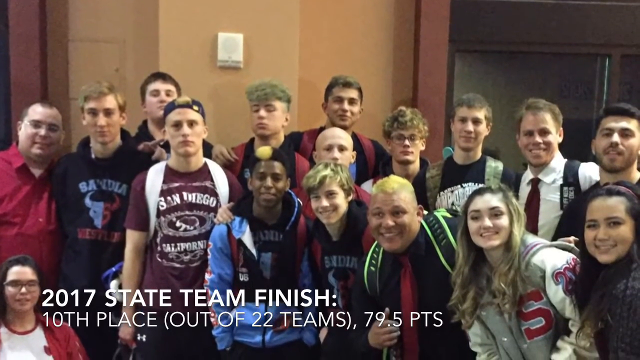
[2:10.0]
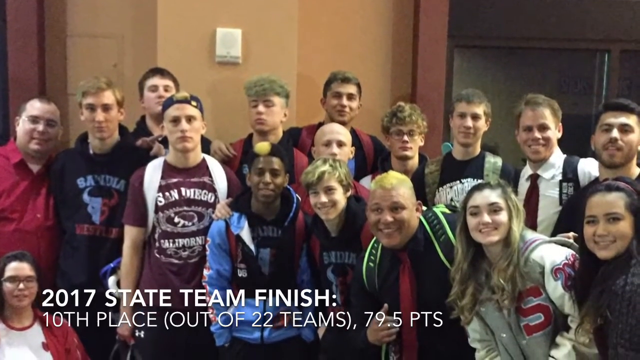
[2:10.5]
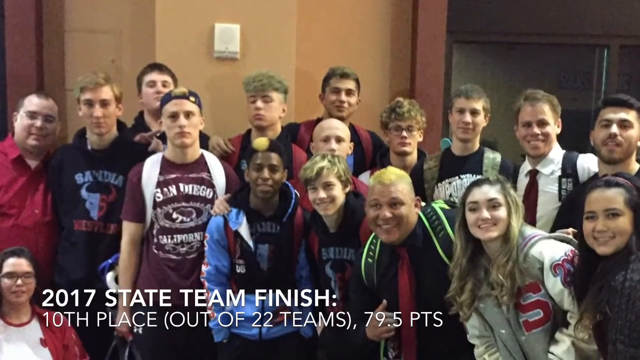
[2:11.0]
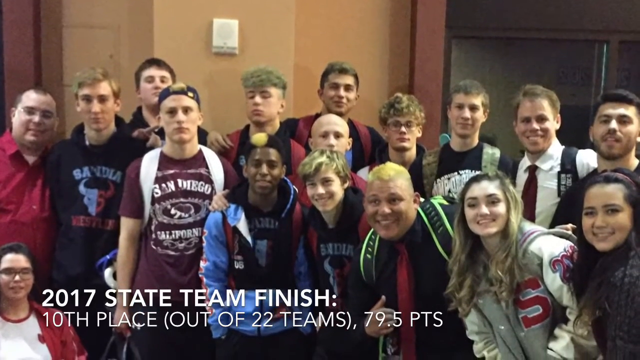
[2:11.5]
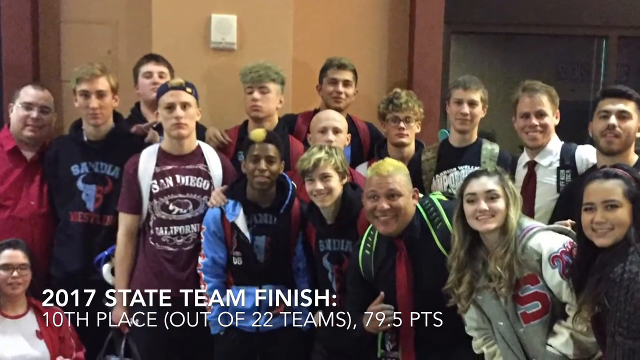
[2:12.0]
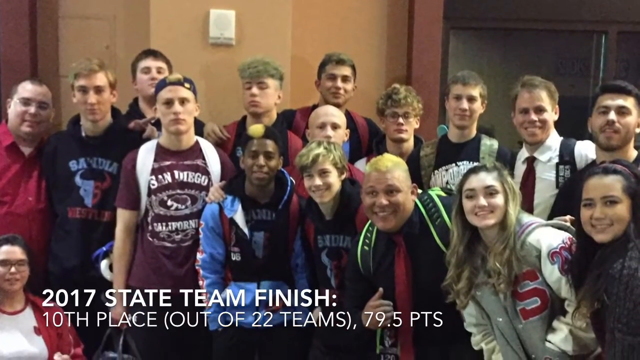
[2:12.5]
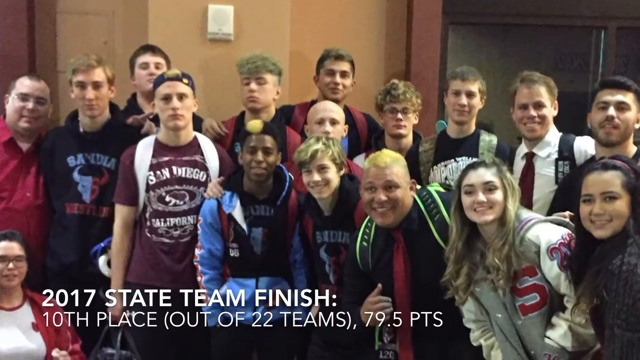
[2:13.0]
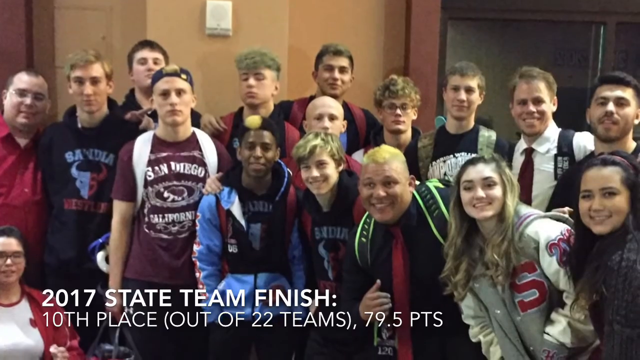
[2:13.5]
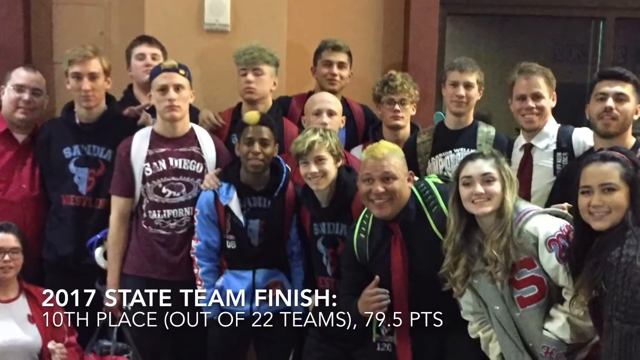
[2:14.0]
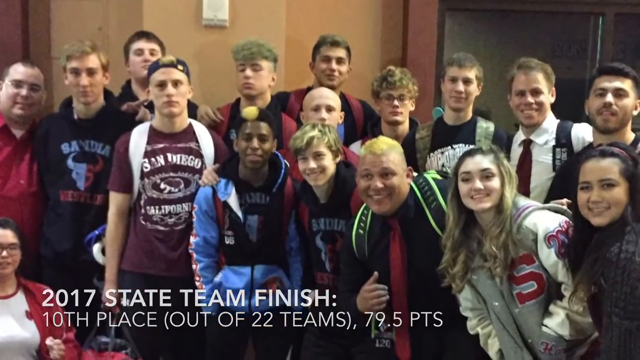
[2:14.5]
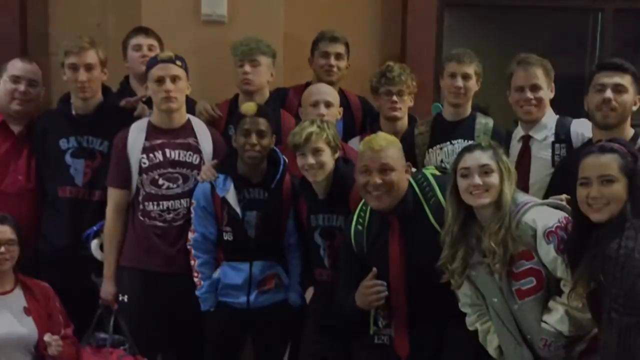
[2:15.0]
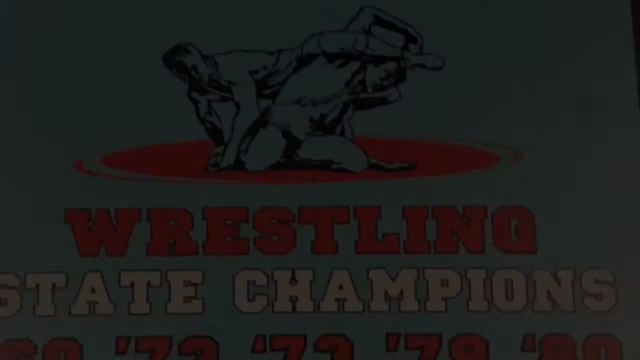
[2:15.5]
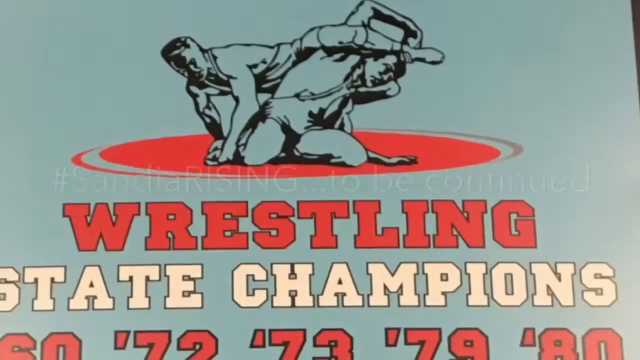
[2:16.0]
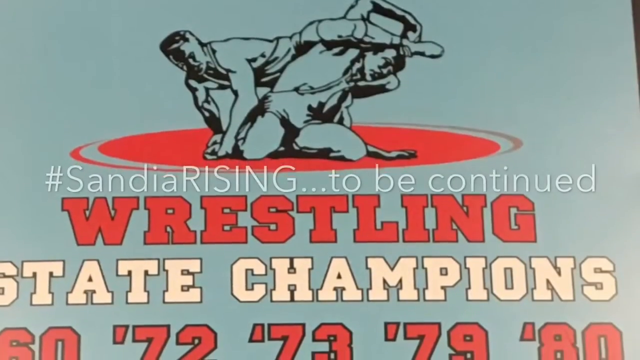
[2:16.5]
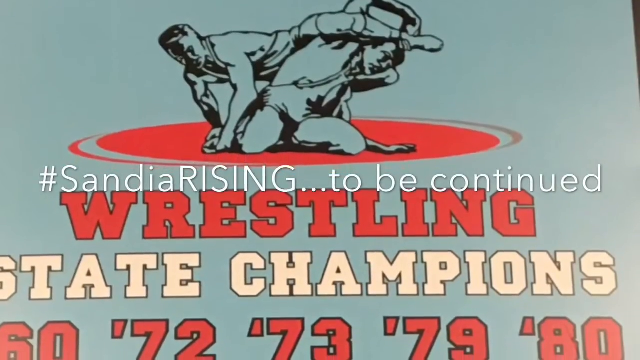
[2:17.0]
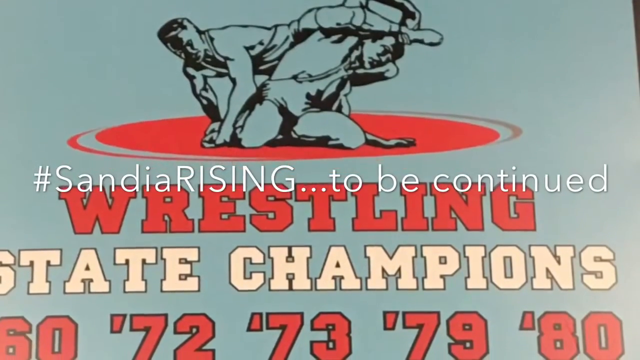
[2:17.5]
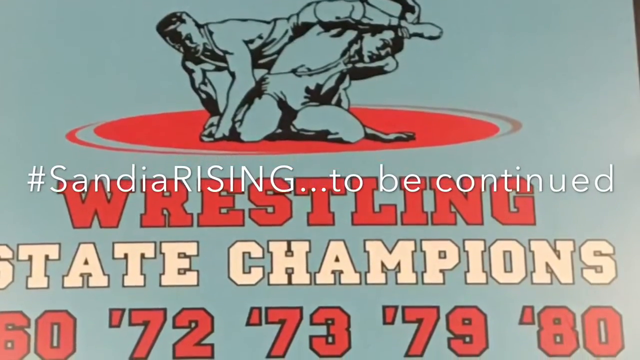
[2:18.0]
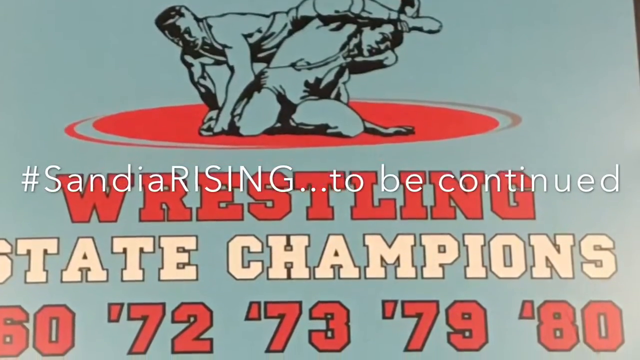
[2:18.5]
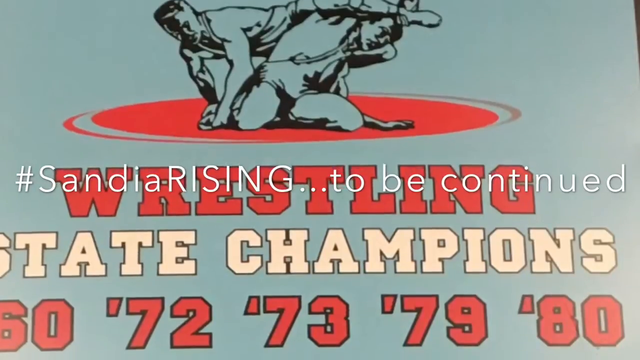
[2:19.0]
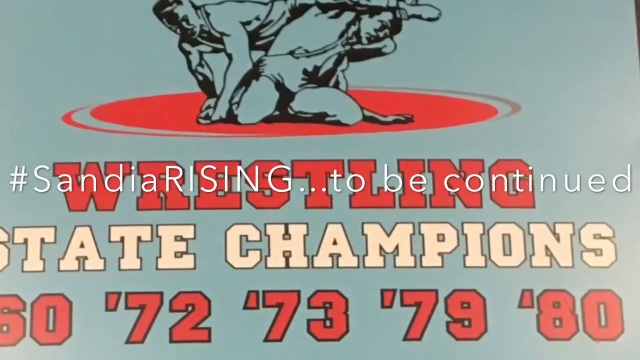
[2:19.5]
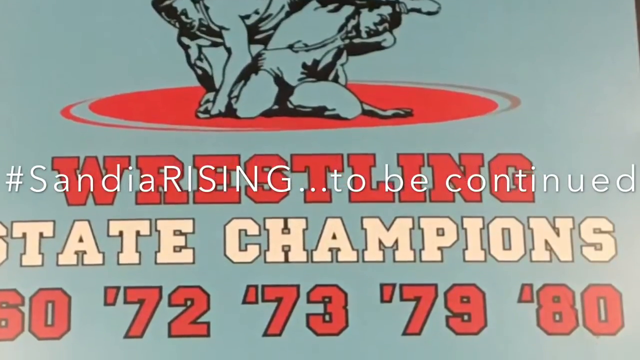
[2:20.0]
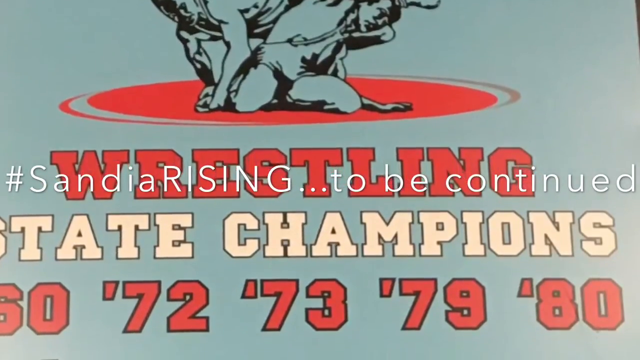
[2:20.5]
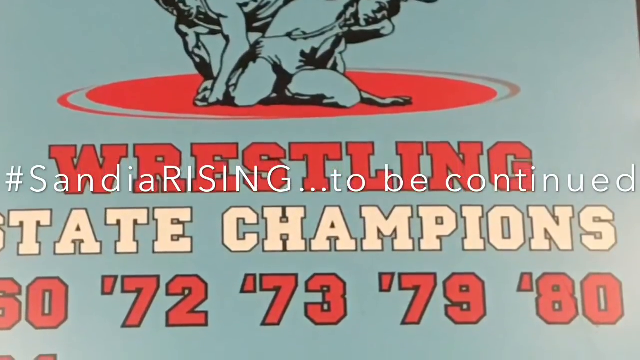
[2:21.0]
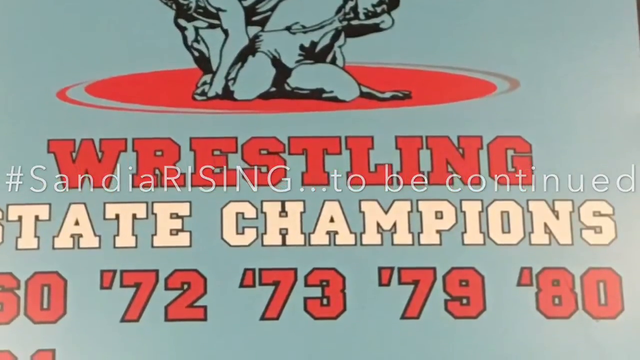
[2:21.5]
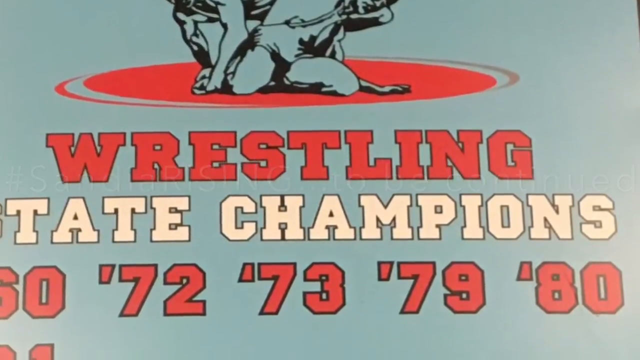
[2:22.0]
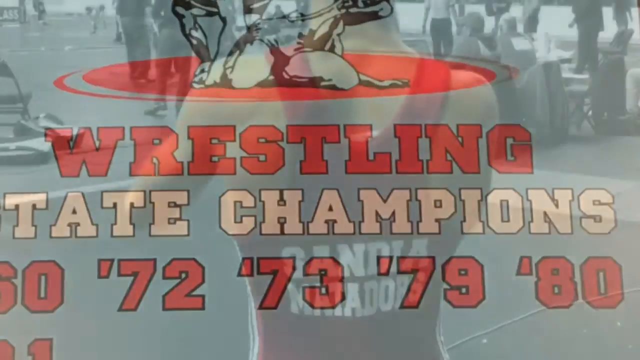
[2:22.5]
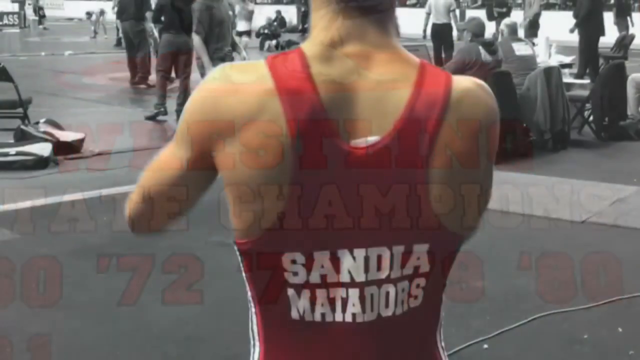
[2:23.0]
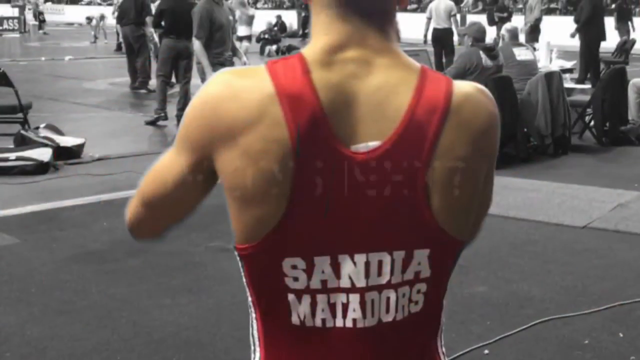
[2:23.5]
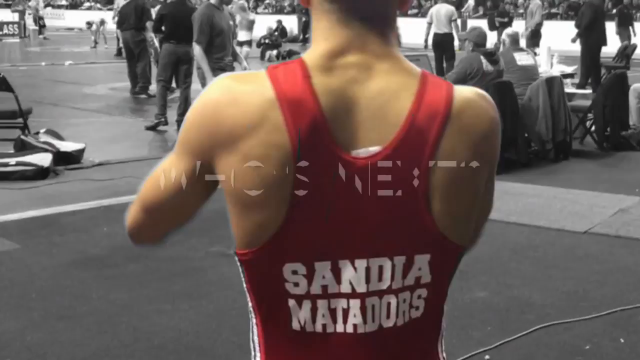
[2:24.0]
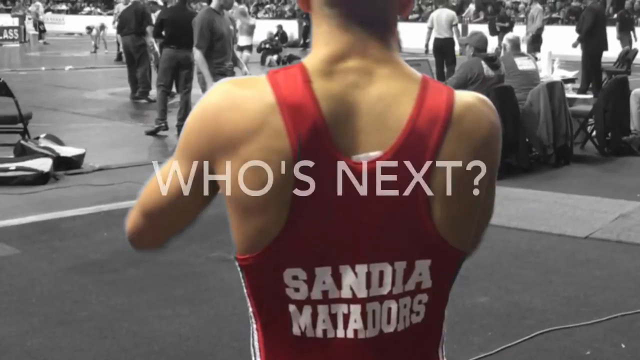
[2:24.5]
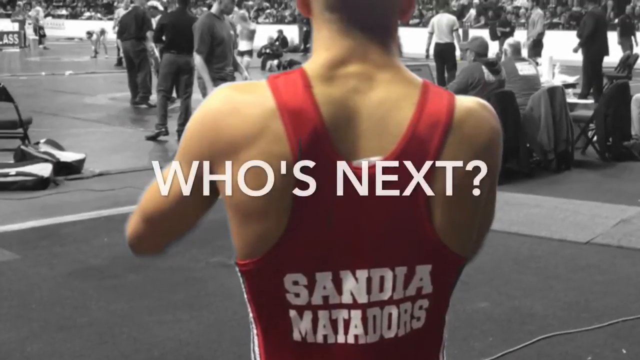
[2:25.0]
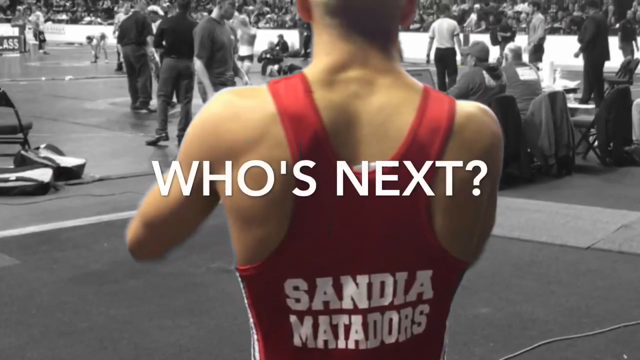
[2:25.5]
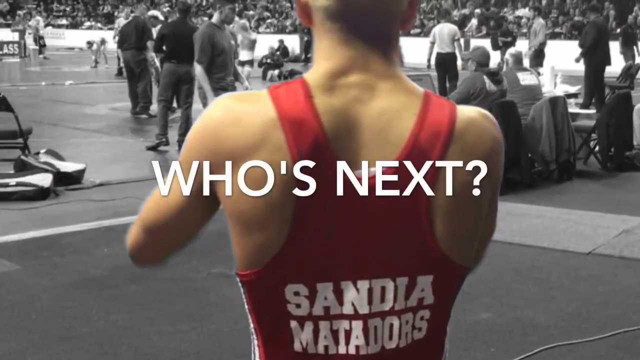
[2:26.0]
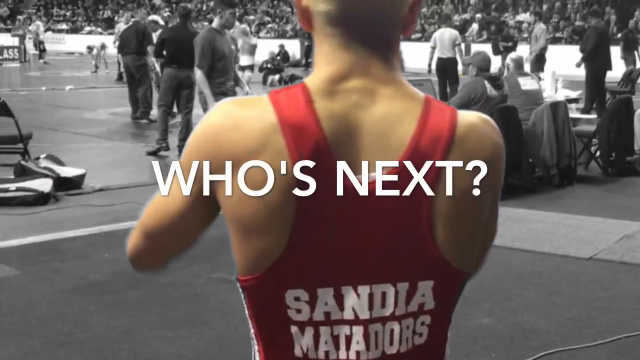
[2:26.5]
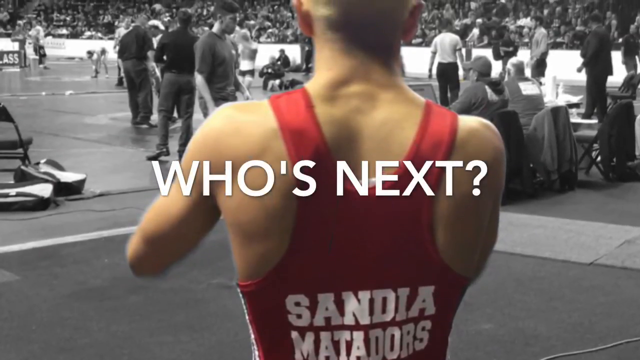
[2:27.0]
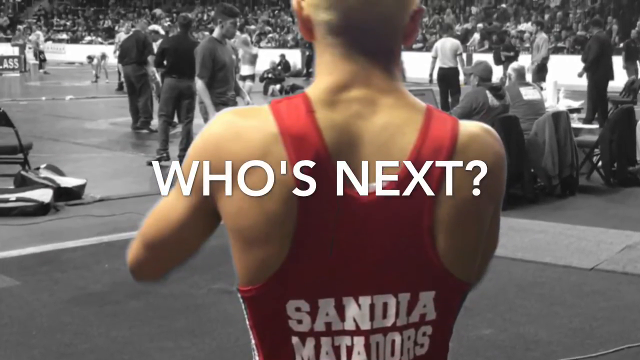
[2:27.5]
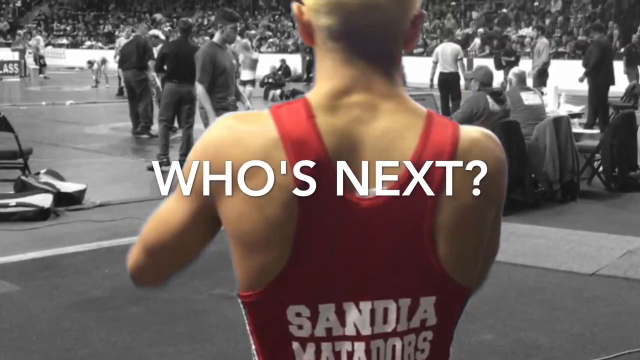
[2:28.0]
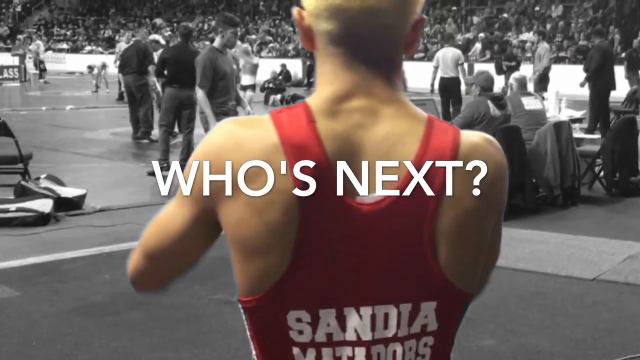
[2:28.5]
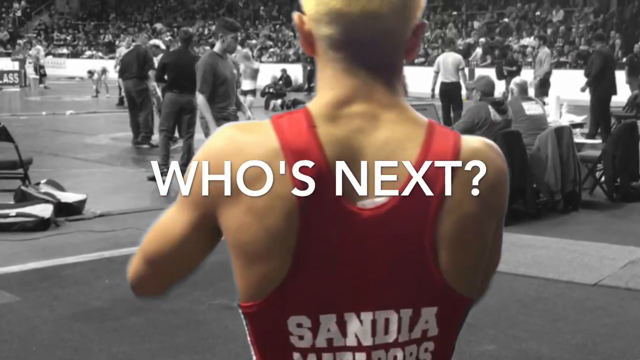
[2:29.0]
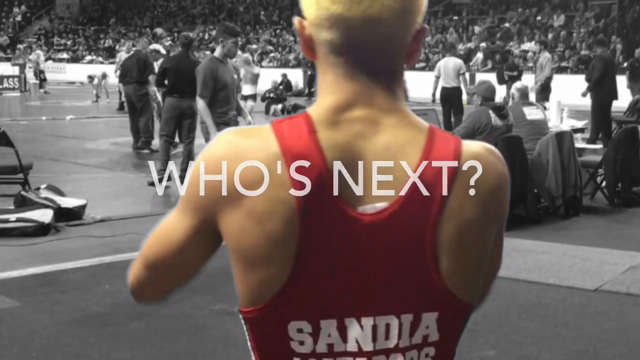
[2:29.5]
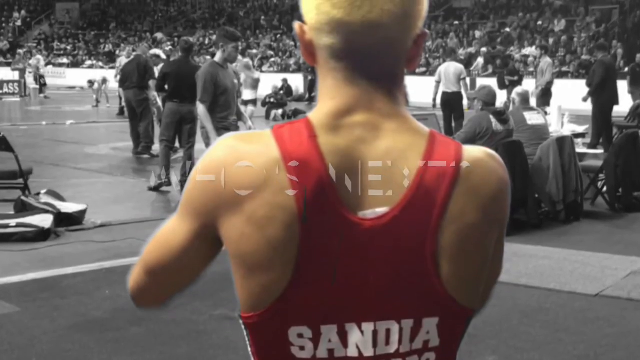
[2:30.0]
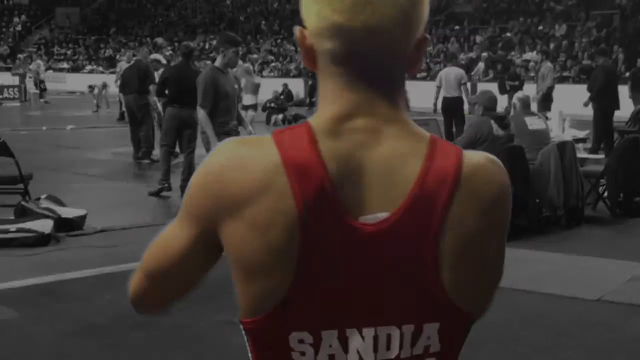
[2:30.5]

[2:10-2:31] The team picture includes some other people from the school and people who look like coaches. Text at the bottom of the screen reads that this is the 2017 state team finish, 10th place out of 22 teams, with 79.5 points. Toward the end, a hashtag reads "#Sandia Rising to be continued," and underneath it the team is shown as state champs in 1960, 1972, 1973, 1979 and 1980.